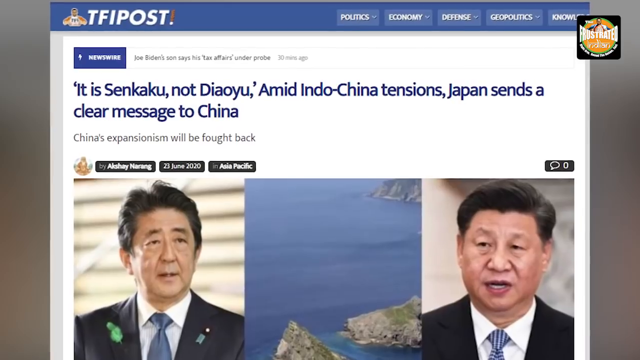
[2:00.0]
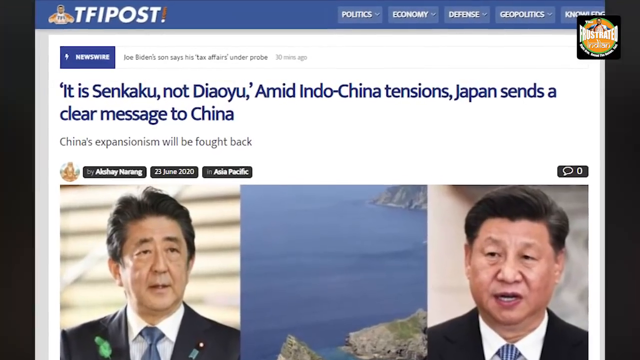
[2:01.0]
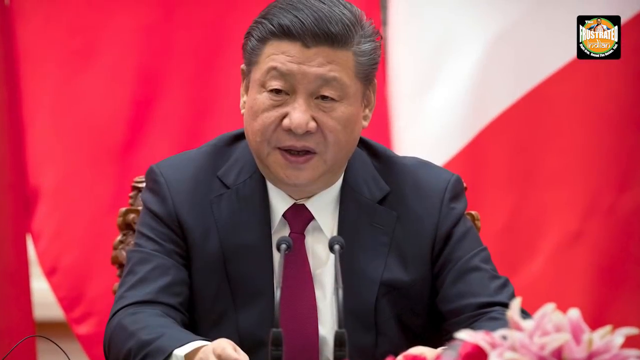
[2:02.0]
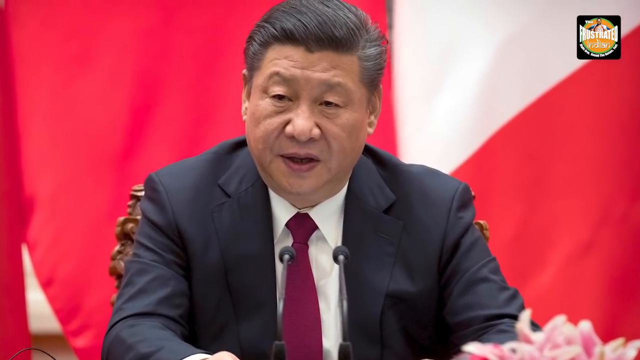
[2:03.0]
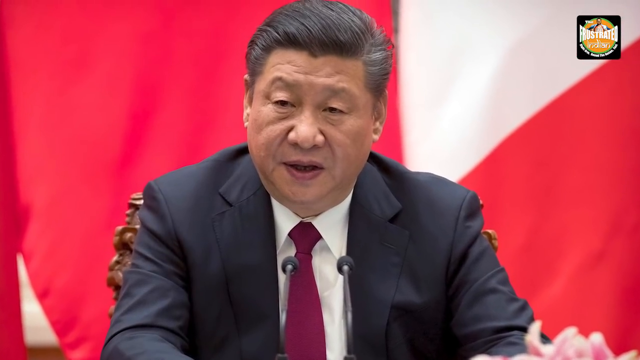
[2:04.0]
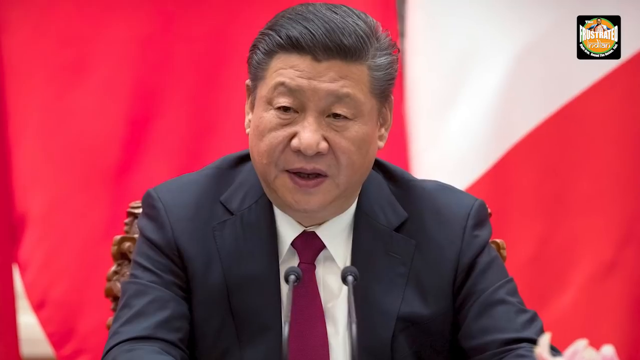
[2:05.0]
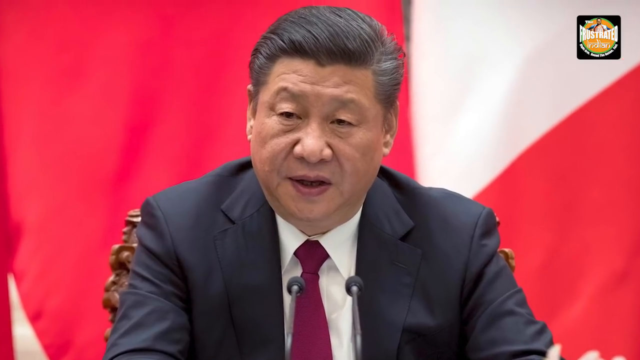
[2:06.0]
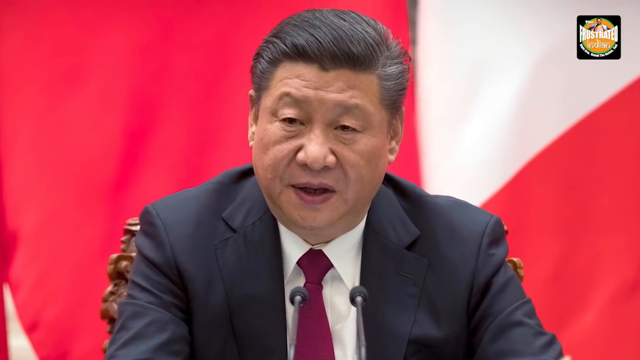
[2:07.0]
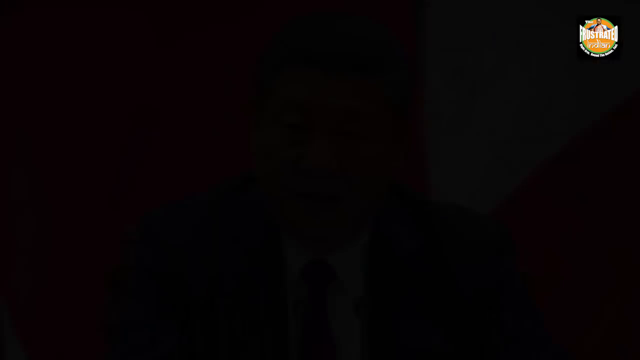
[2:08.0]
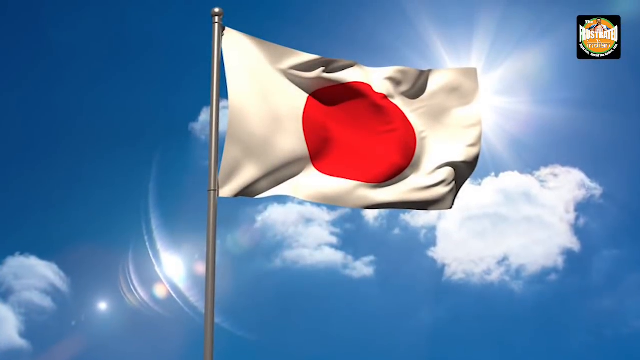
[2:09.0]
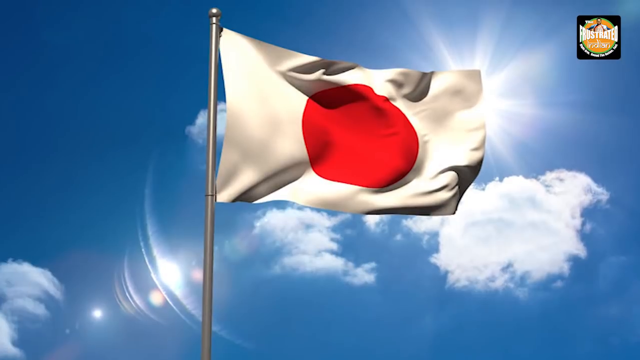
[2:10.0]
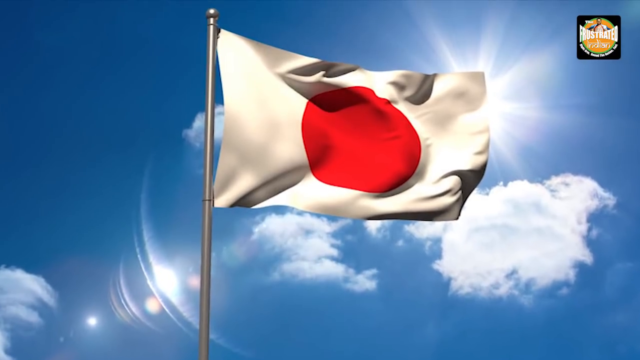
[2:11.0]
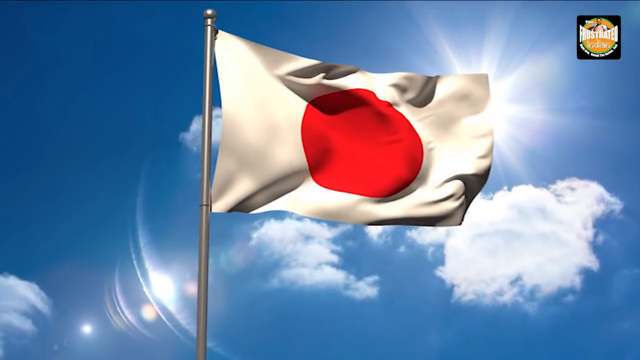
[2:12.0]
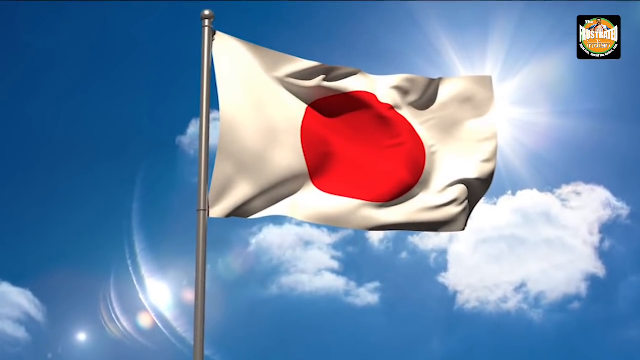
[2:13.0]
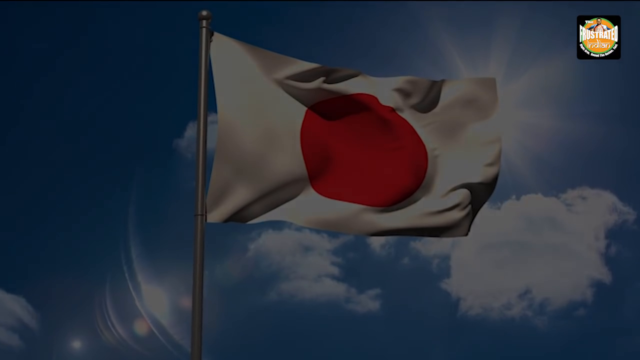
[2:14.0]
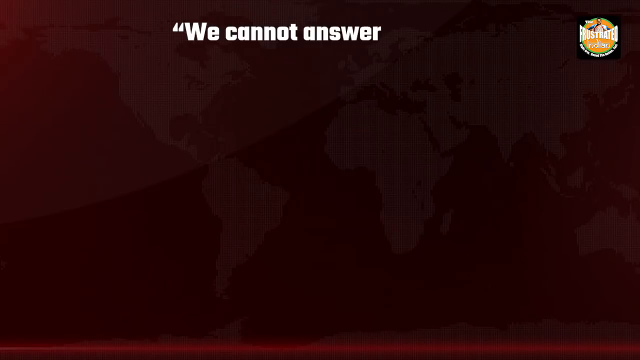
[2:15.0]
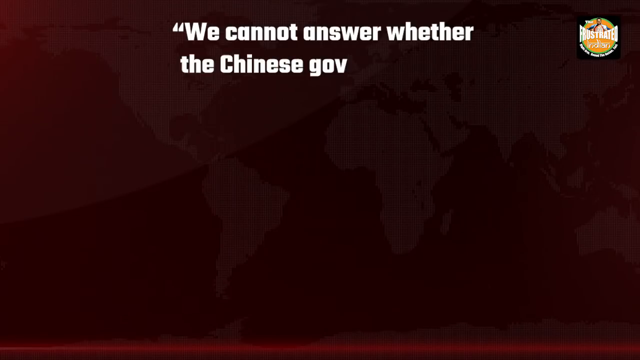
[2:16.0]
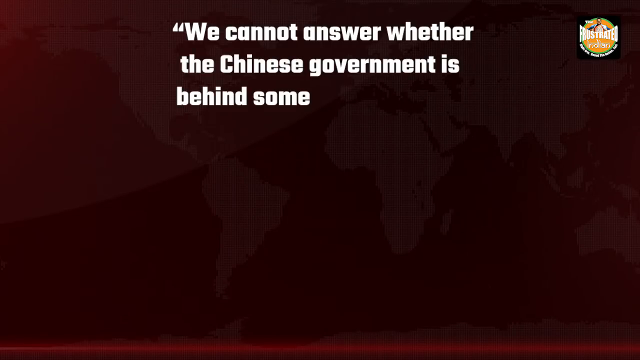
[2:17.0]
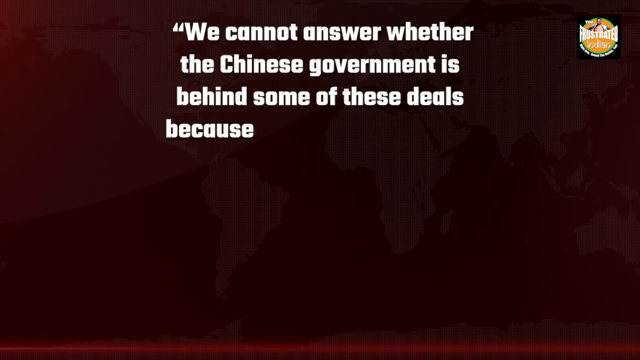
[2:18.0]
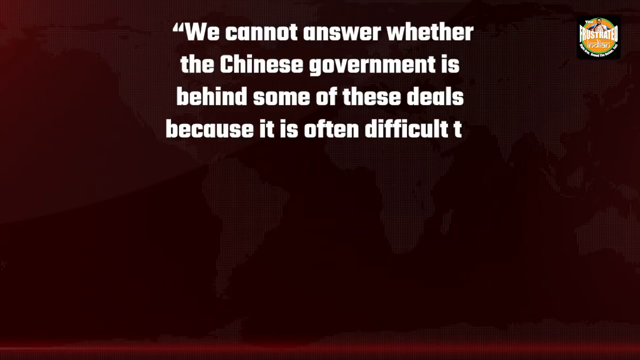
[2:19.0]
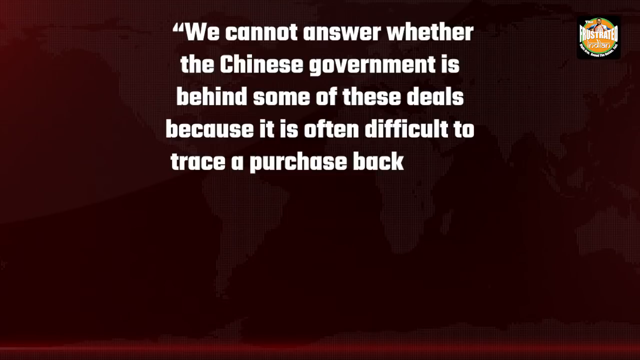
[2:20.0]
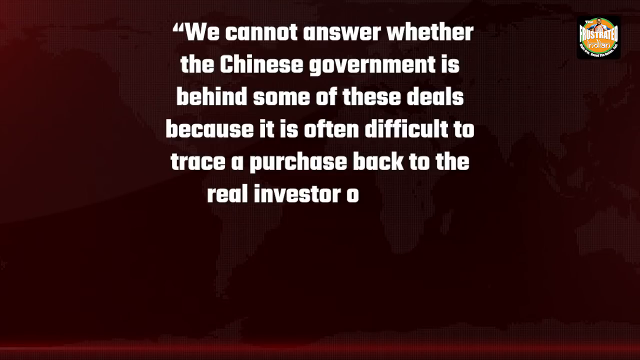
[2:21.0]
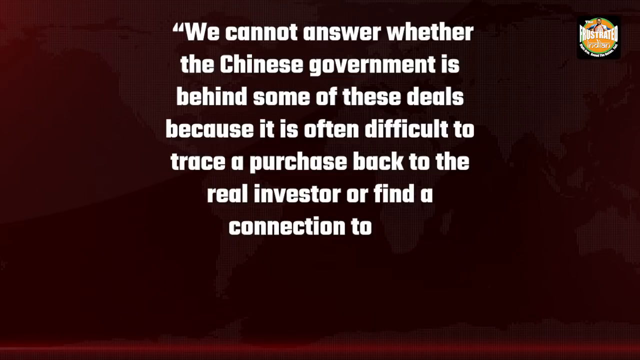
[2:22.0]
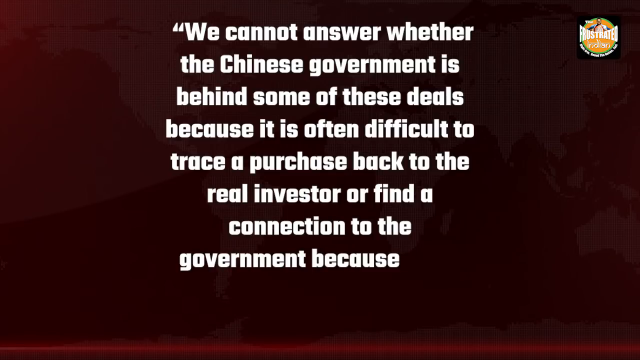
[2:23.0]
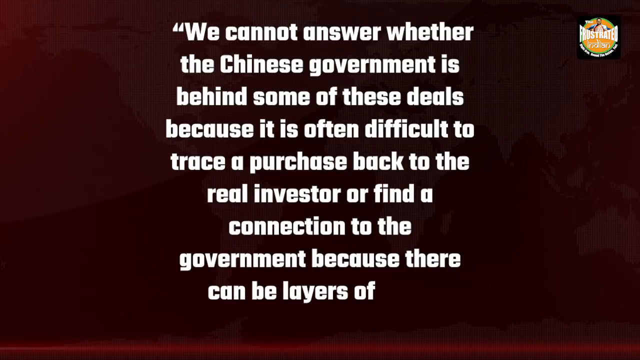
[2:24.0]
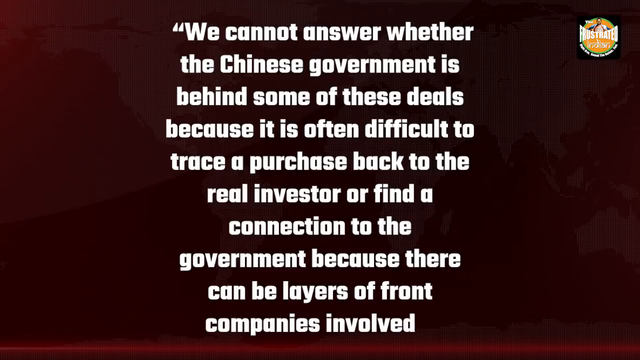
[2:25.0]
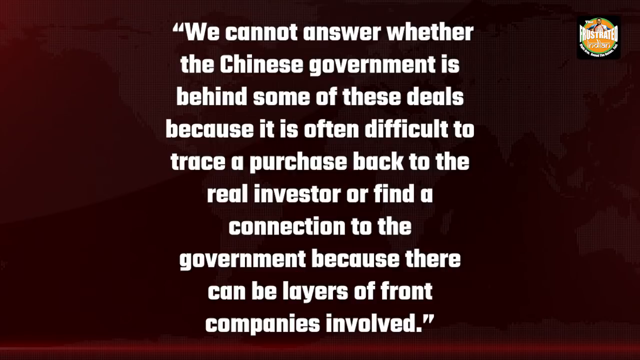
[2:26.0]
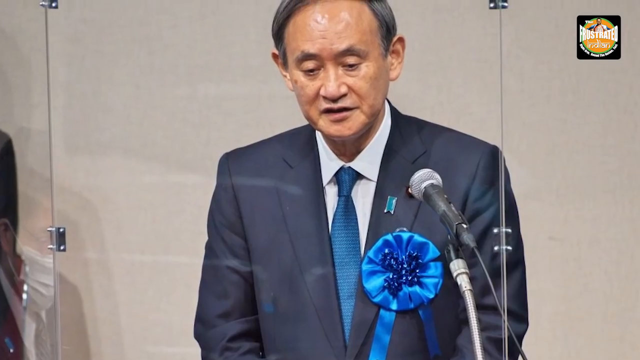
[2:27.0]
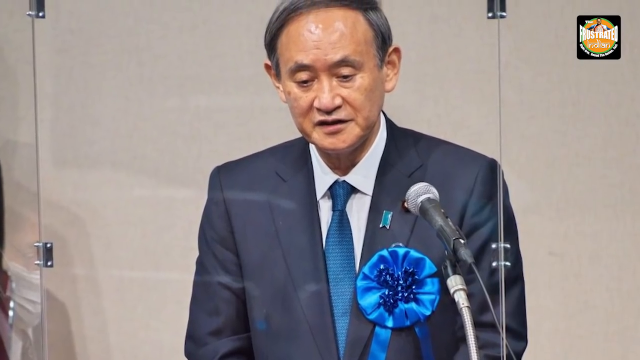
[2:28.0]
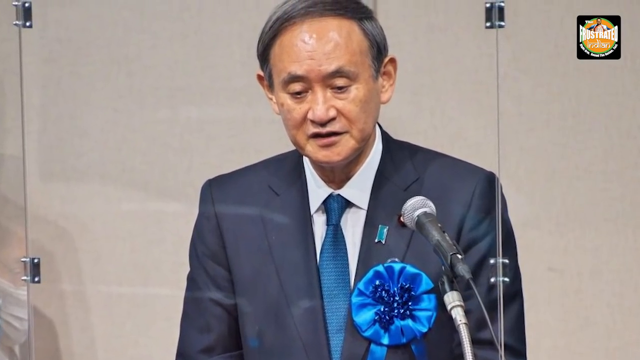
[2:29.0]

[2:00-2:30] An image shows a man in elegant clothes: a jacket, probably black or blue, a red tie and a white shirt. Behind him are different backgrounds and colors, mainly red and white. A very small logo with slightly rounded edges is visible at the top right of the screen. Then a graphic of the flag of Japan appears, with a white background and a red circle in the center, set against a sky with some clouds and sunbeams that almost seem to penetrate the fabric of the flag. Next, white words appear one after another on a dark red background.